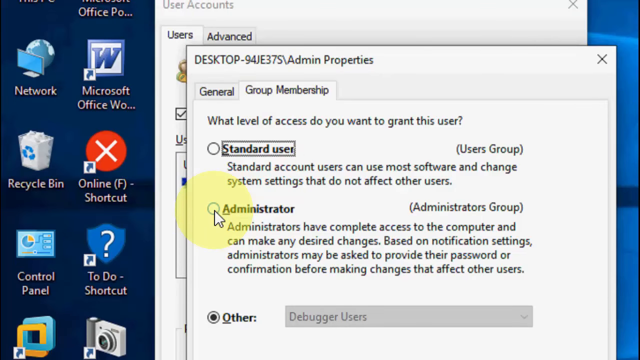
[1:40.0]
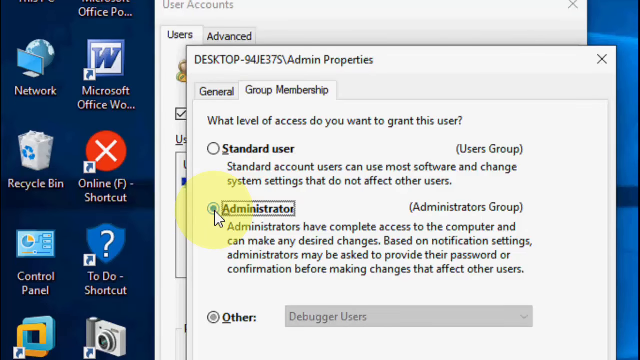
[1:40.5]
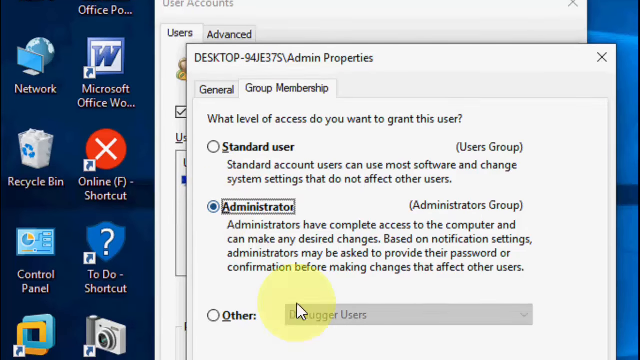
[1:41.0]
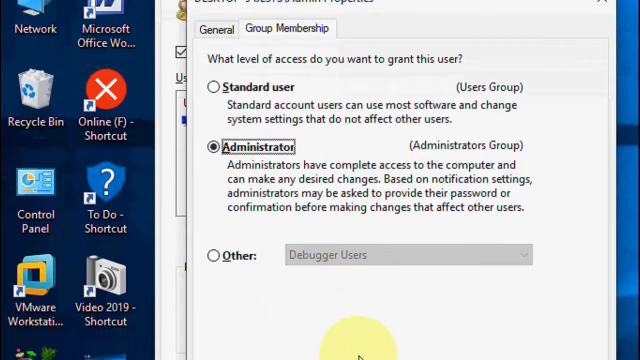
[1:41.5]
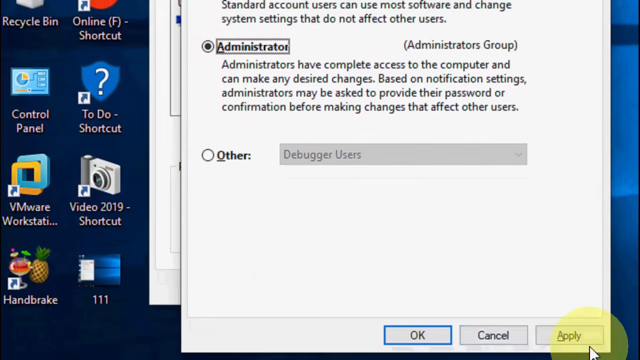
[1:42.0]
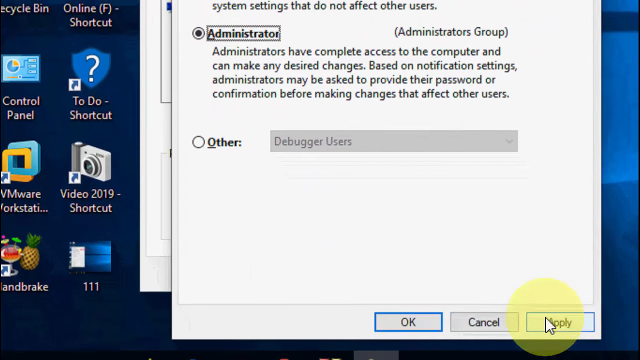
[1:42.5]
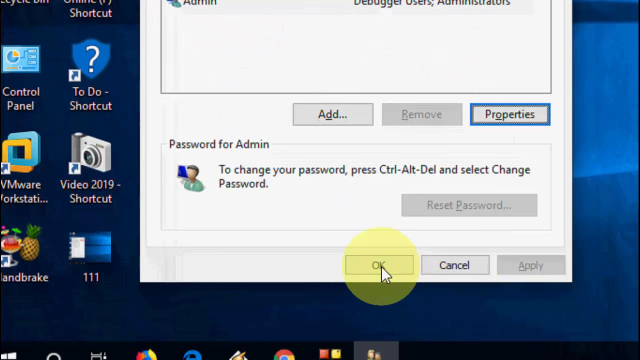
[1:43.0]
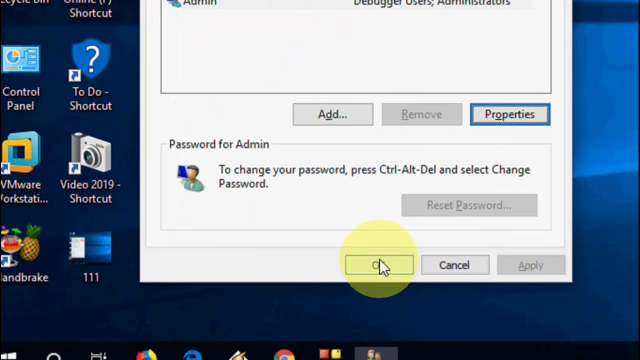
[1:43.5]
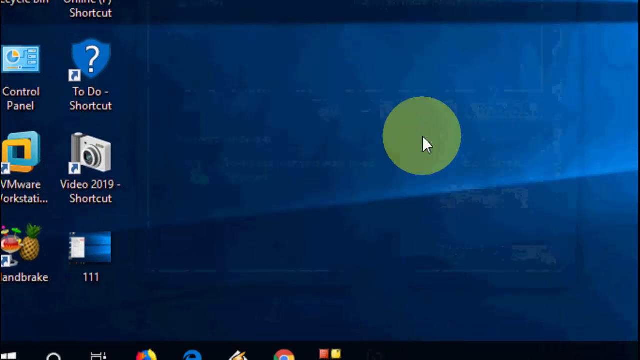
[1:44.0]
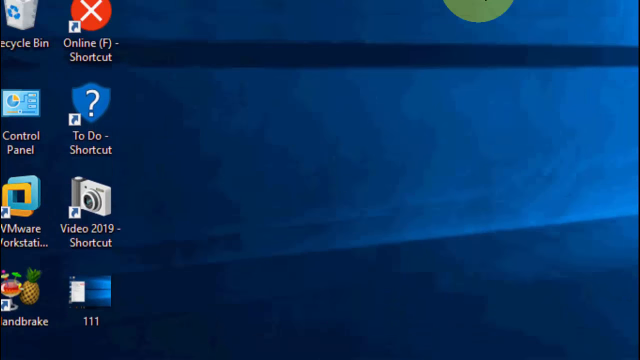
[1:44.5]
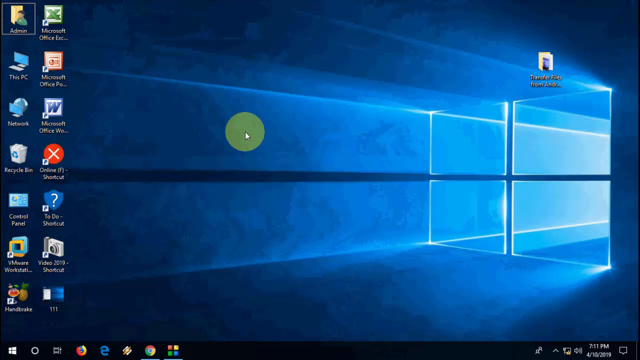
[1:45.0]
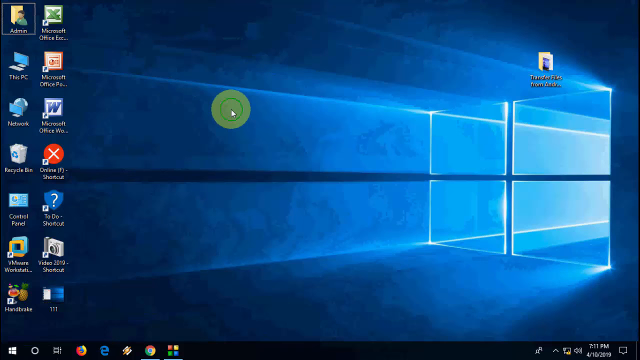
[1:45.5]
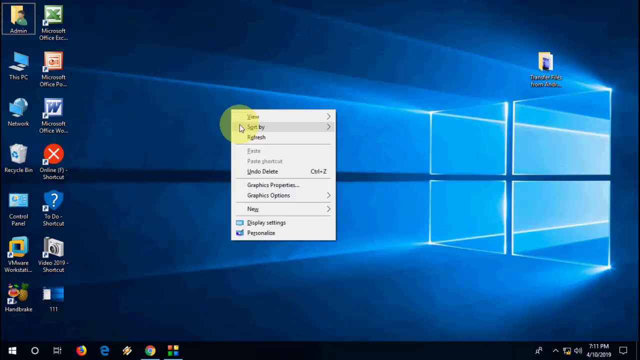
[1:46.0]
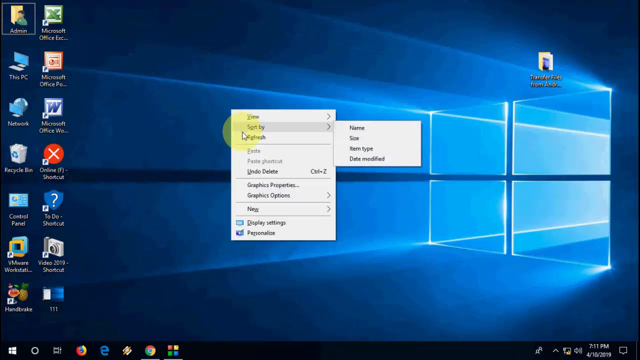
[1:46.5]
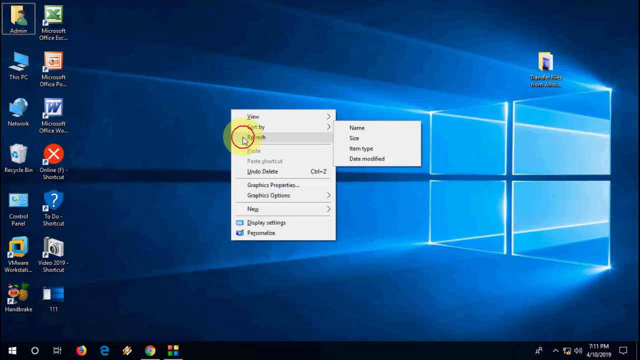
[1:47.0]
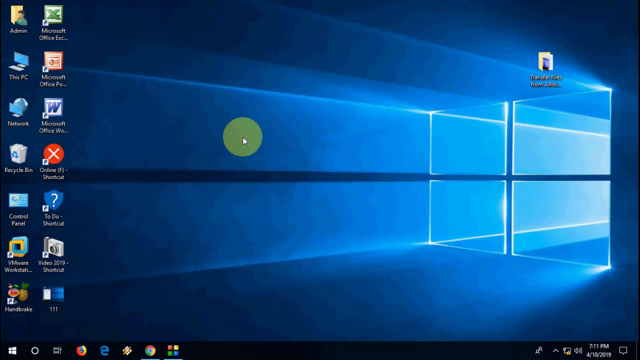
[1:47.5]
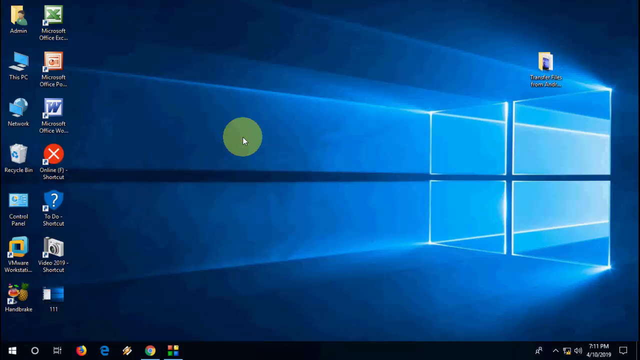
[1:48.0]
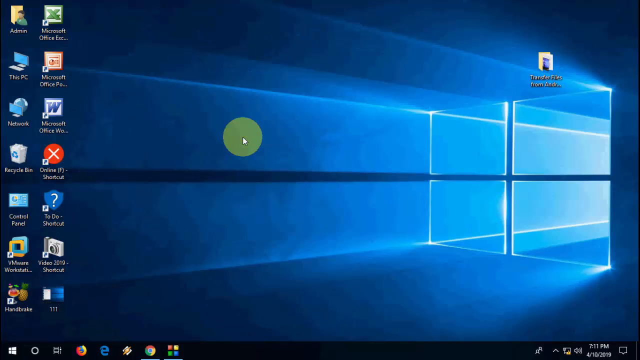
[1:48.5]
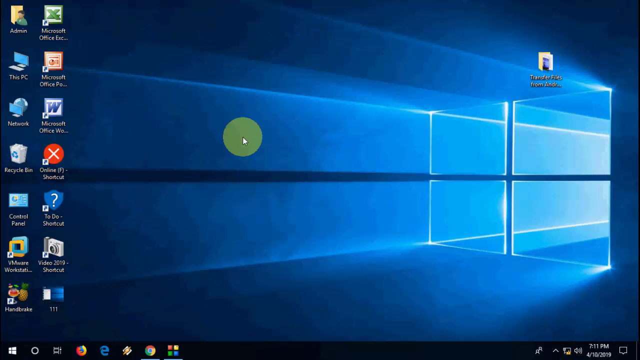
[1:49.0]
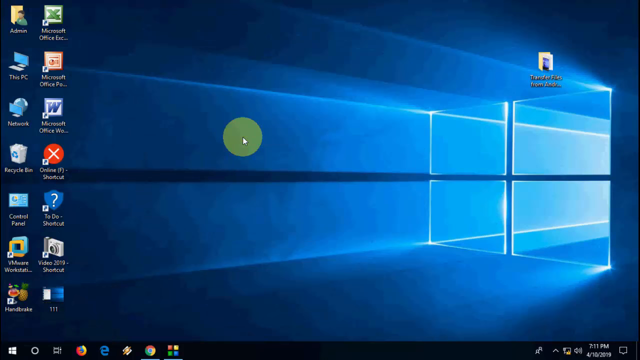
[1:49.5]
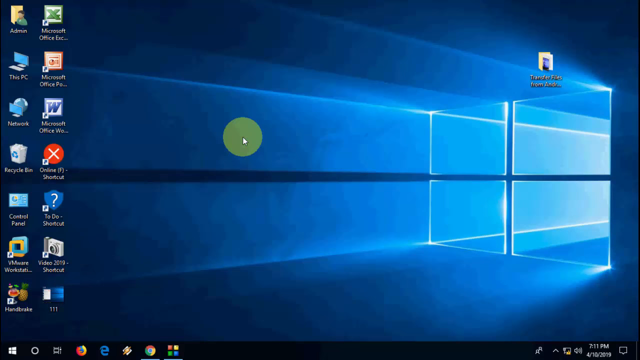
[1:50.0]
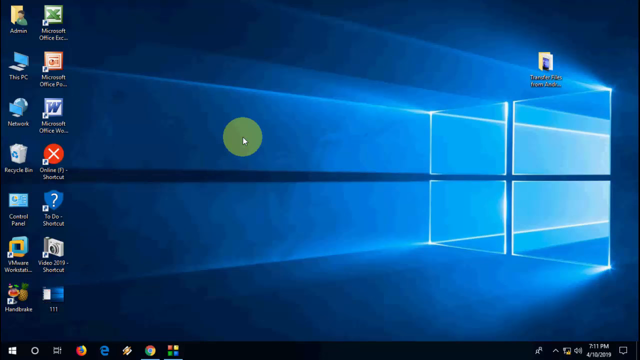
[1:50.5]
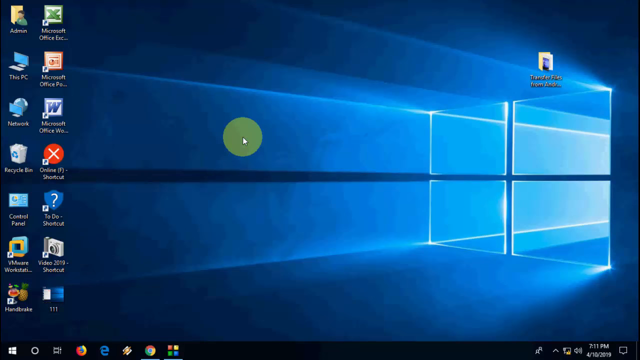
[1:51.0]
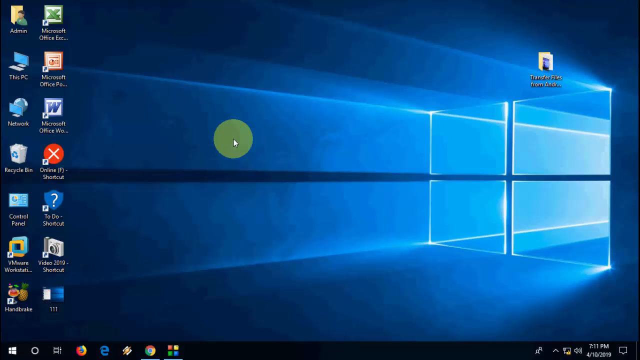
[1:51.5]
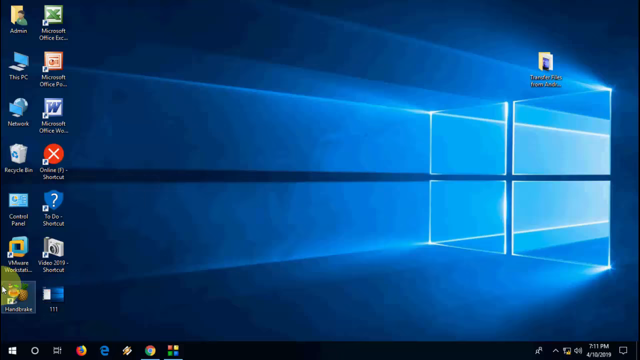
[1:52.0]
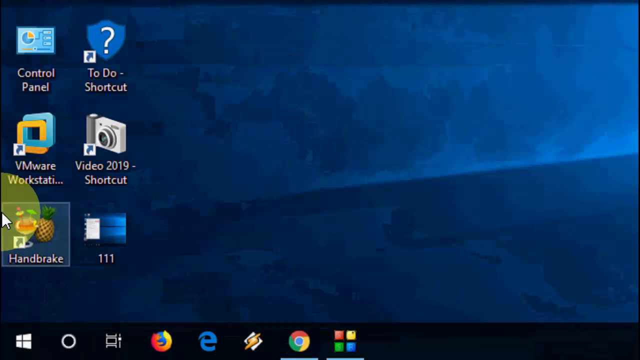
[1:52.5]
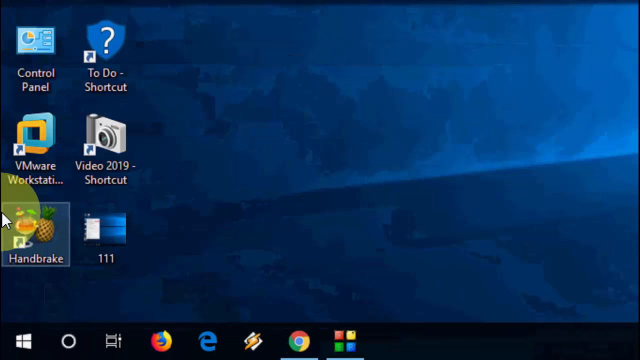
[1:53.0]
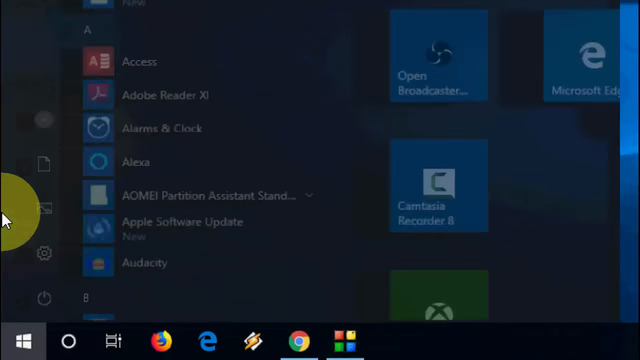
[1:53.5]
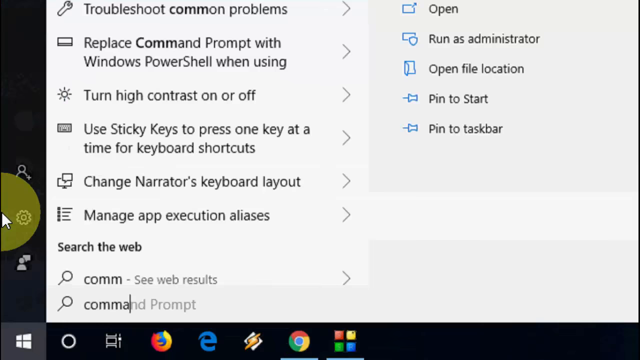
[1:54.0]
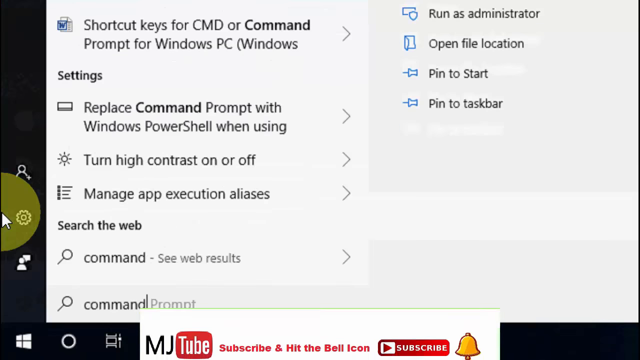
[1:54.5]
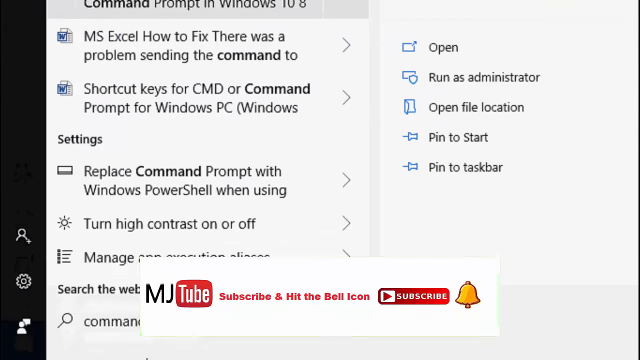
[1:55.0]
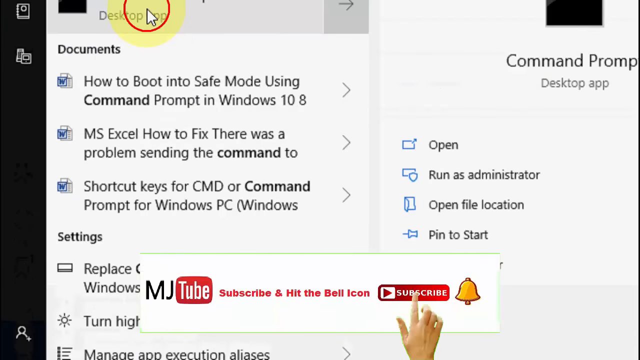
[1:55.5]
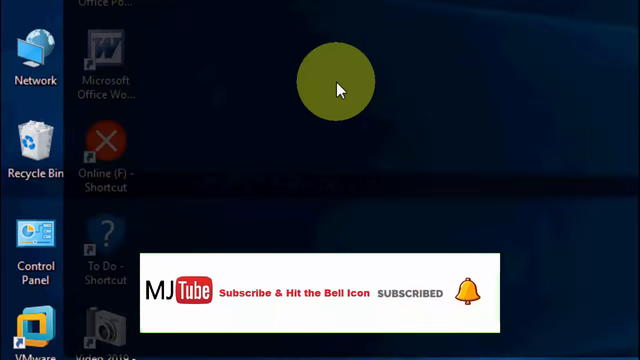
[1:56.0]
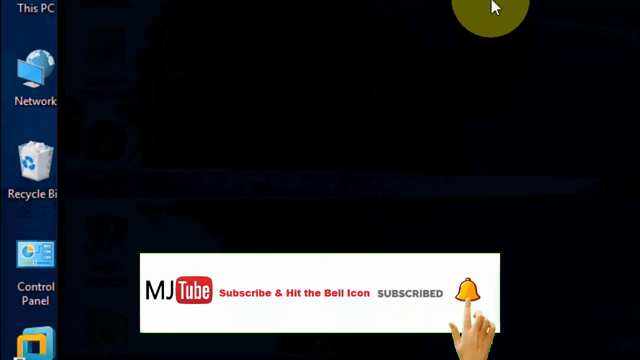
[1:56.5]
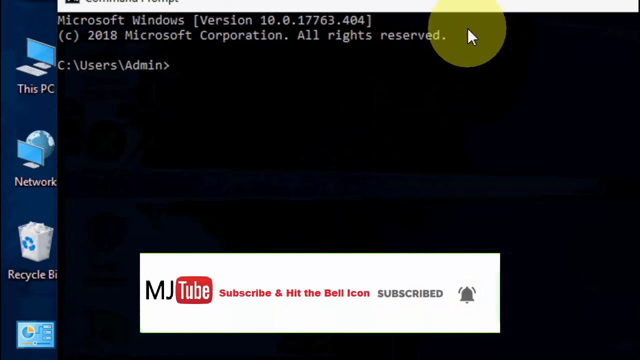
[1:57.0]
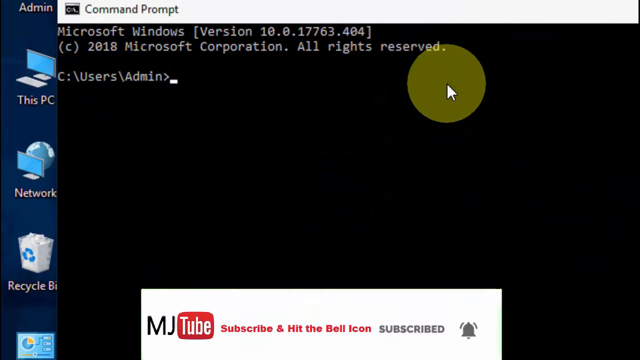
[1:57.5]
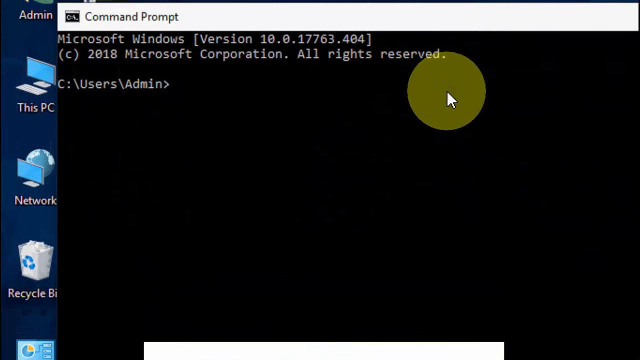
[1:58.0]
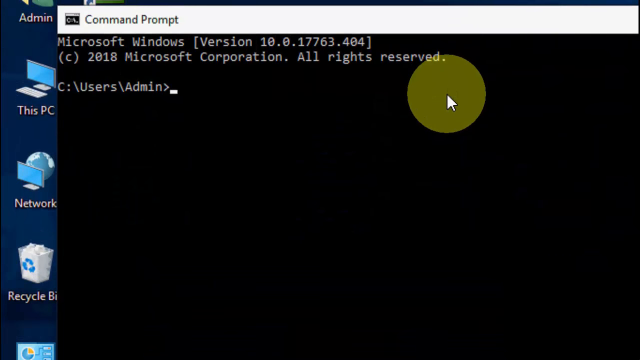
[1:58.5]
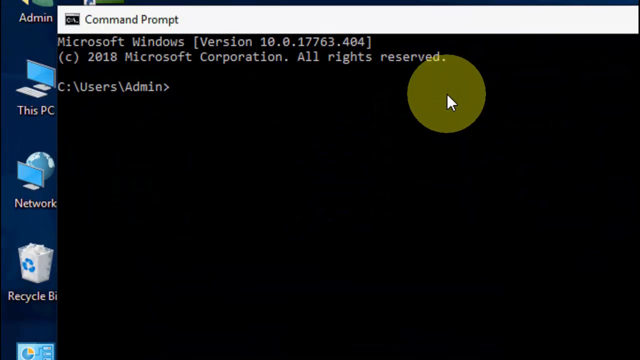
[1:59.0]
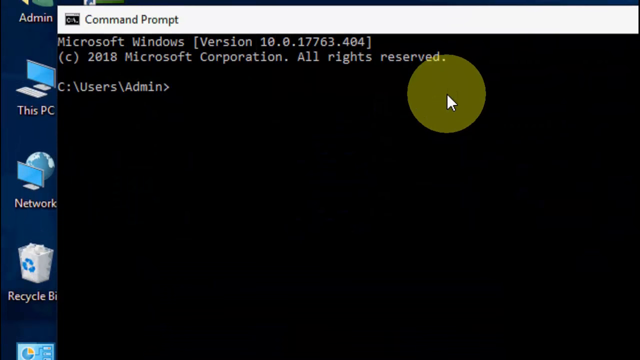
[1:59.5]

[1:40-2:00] The desktop of a Windows PC shows eight shortcuts: Network, Microsoft Officeworks, Recycling Bin, Offline Shortcut, To-Do Shortcut and Control Panel, plus two more whose names cannot be read, one with a camera and the other with two interlocked squares. Pop-up boxes for user accounts and desktop admin properties are open. The cursor hovers over the administrator selection; it has a see-through yellow circle around it that moves with it whenever it moves, making the cursor look highlighted. It clicks OK, and the view returns to the Windows screensaver on the desktop, where the cursor and its circle move around and open the command prompt.